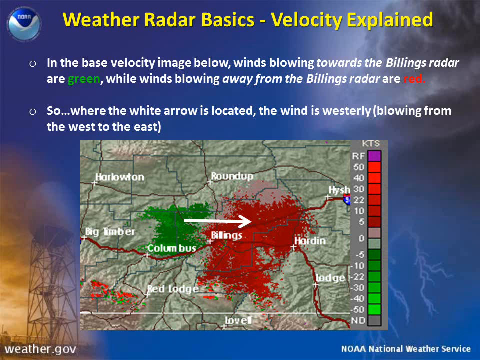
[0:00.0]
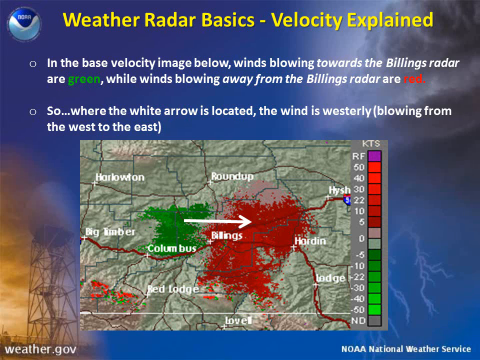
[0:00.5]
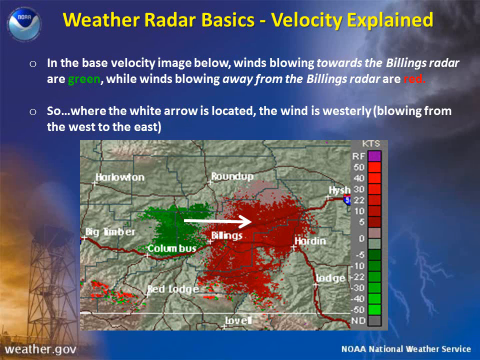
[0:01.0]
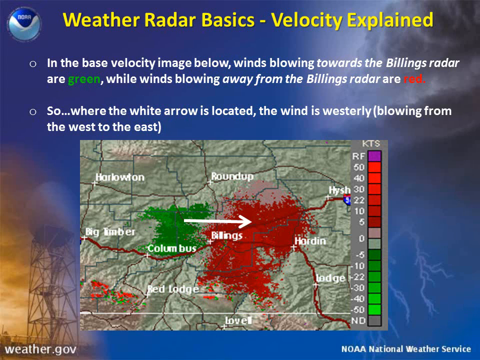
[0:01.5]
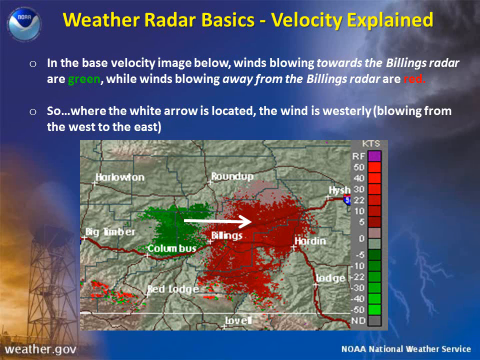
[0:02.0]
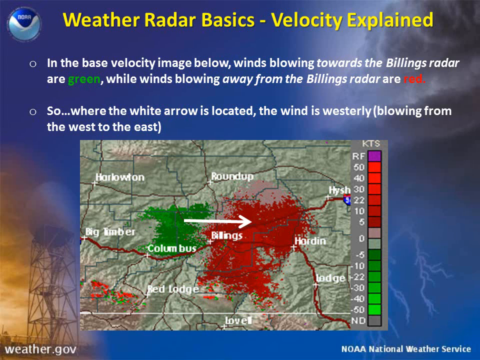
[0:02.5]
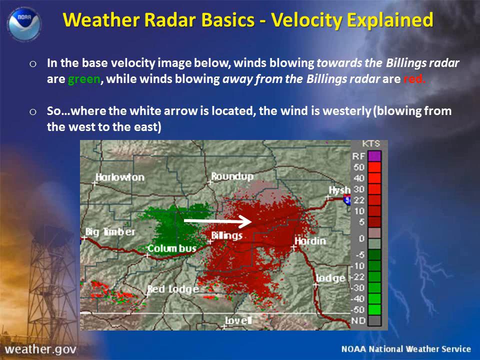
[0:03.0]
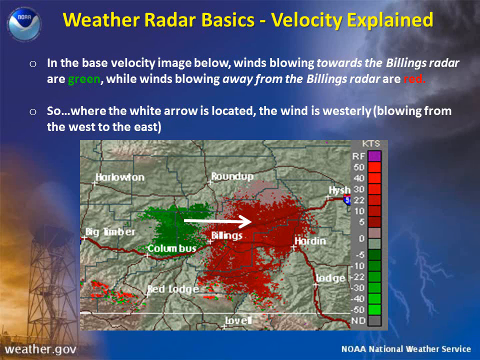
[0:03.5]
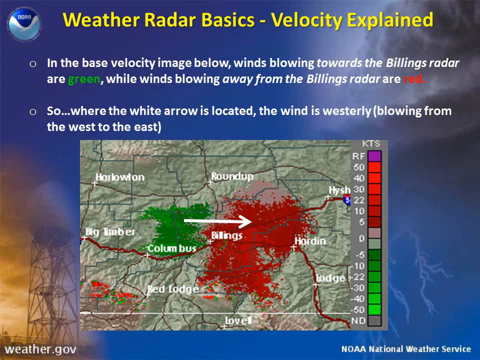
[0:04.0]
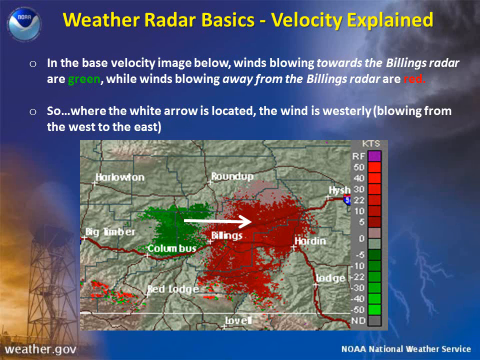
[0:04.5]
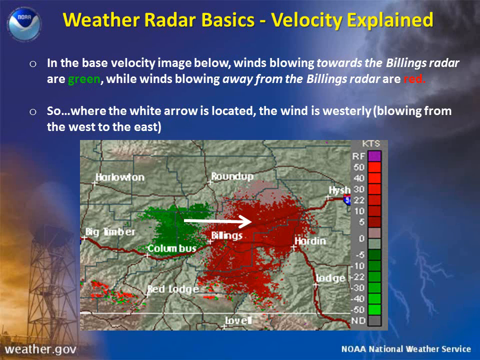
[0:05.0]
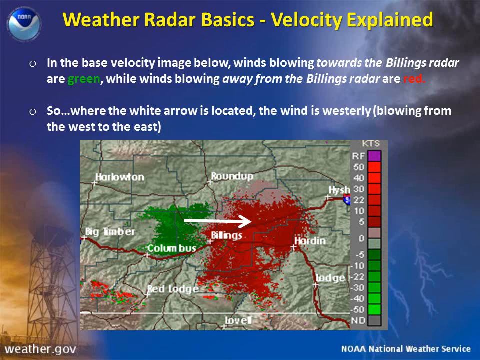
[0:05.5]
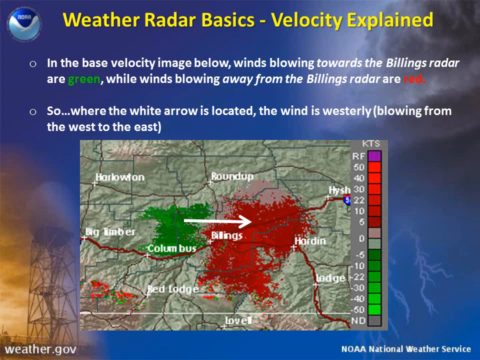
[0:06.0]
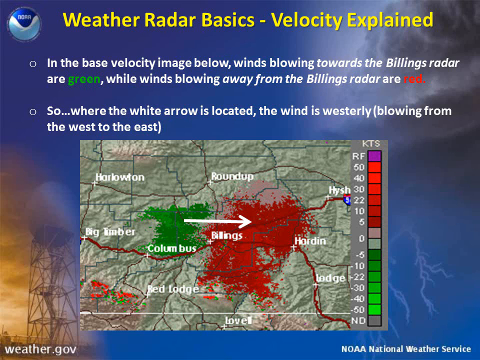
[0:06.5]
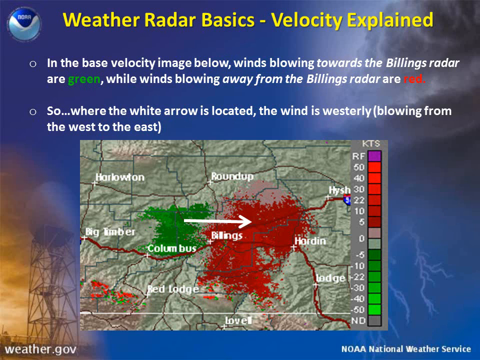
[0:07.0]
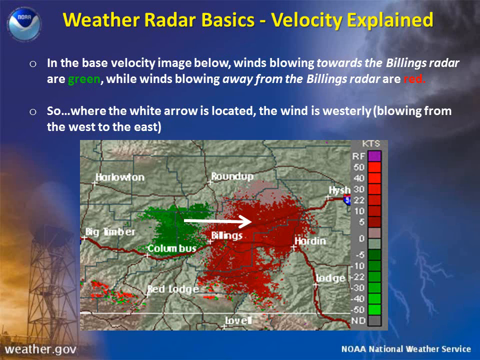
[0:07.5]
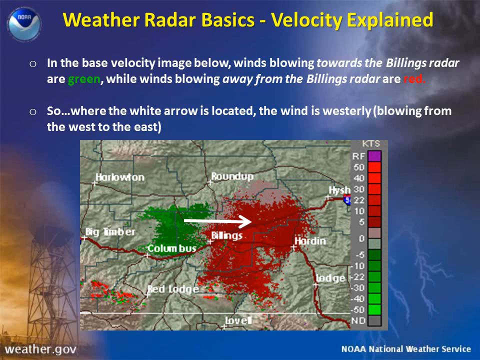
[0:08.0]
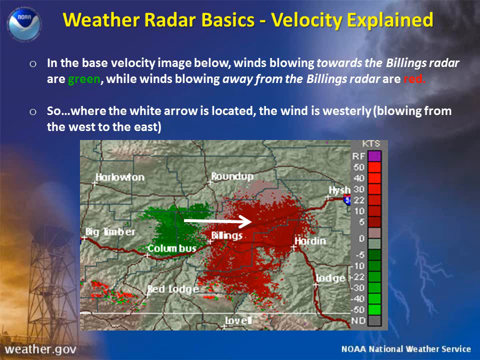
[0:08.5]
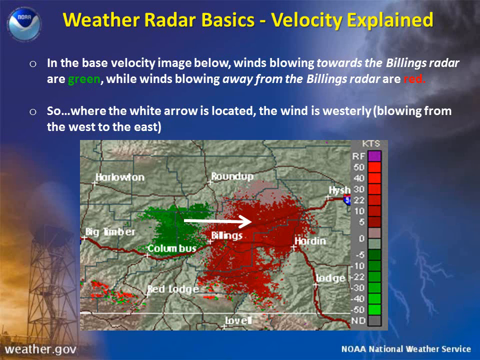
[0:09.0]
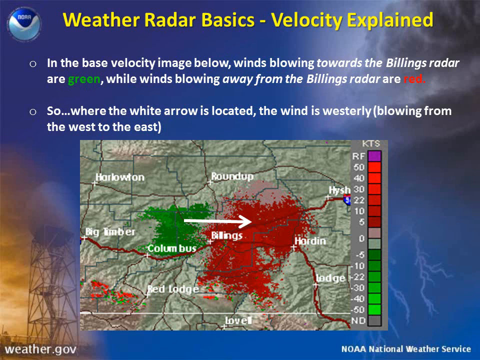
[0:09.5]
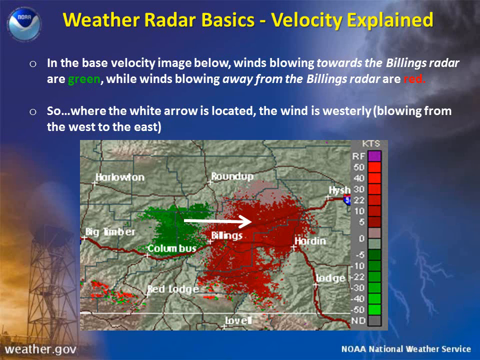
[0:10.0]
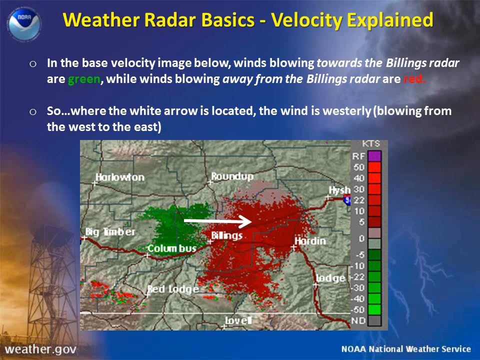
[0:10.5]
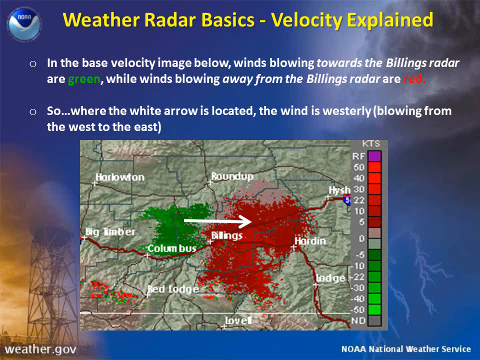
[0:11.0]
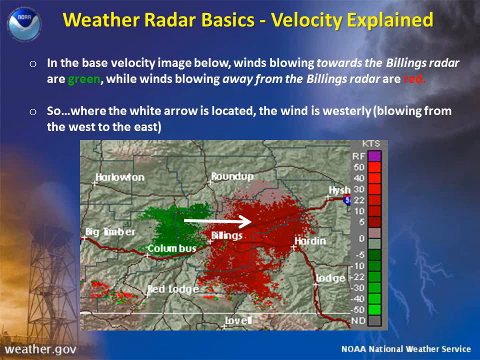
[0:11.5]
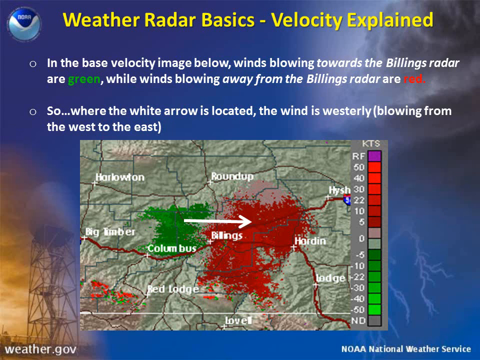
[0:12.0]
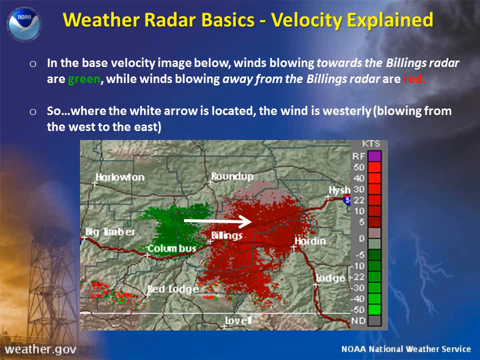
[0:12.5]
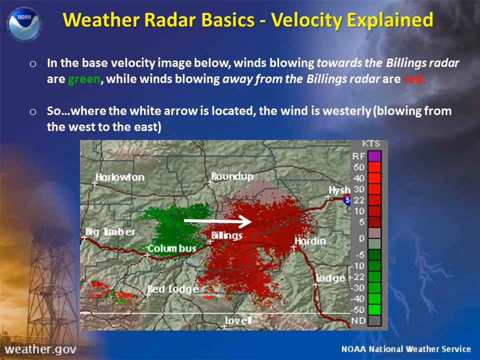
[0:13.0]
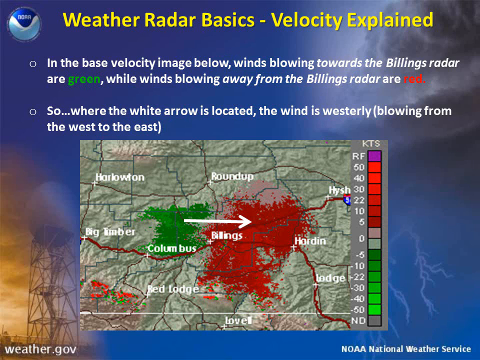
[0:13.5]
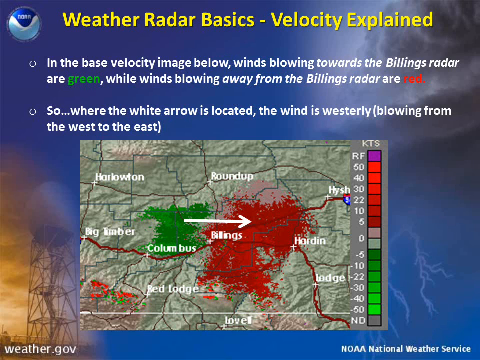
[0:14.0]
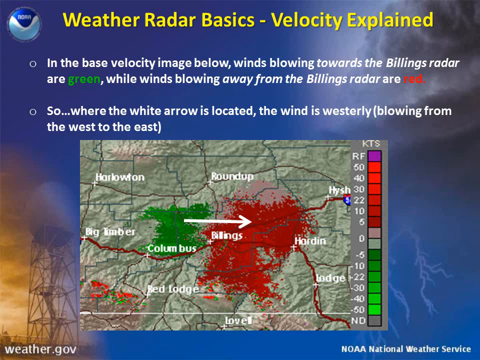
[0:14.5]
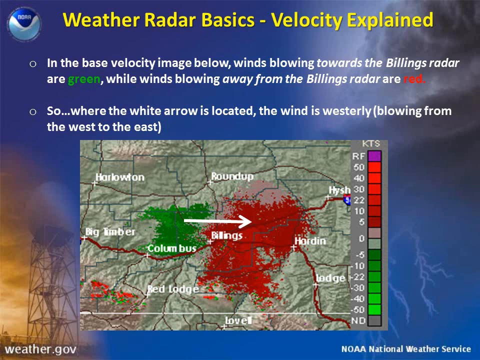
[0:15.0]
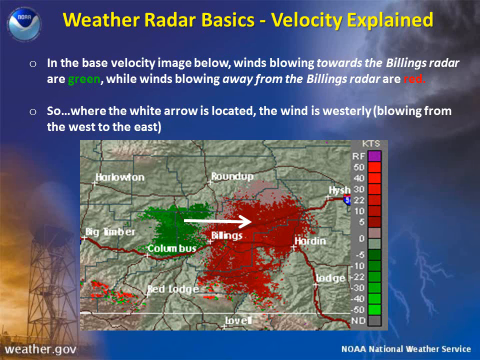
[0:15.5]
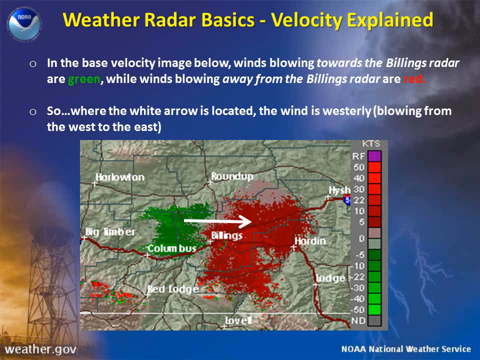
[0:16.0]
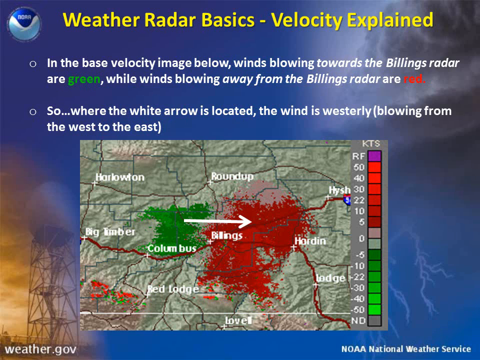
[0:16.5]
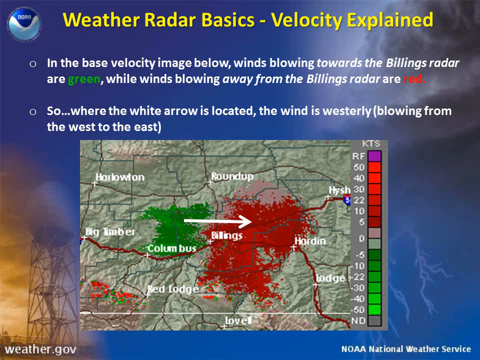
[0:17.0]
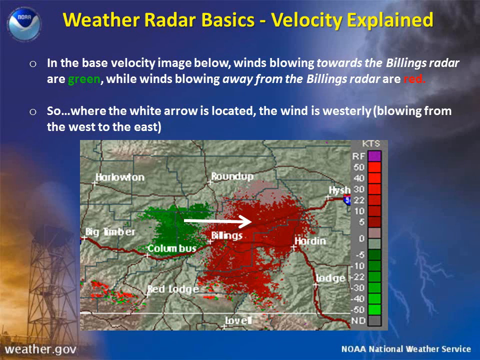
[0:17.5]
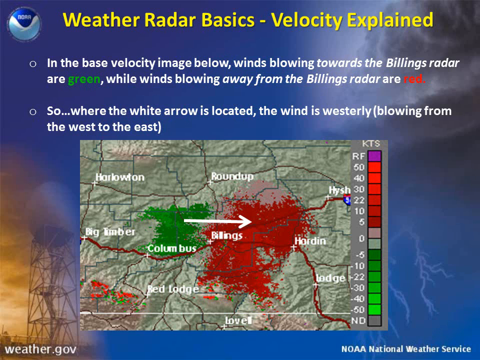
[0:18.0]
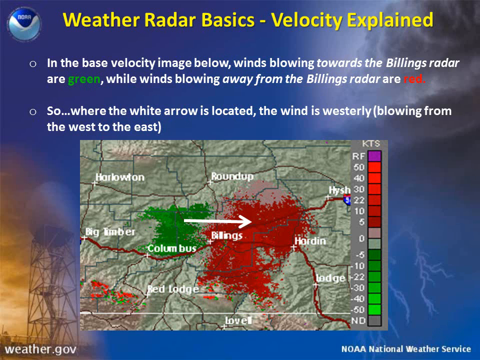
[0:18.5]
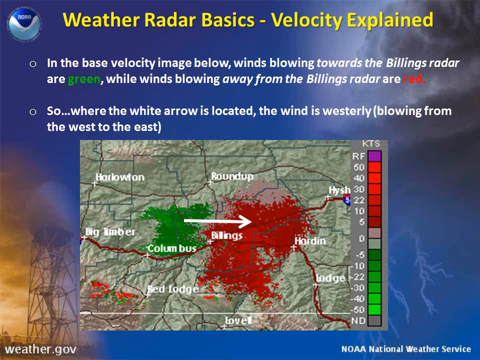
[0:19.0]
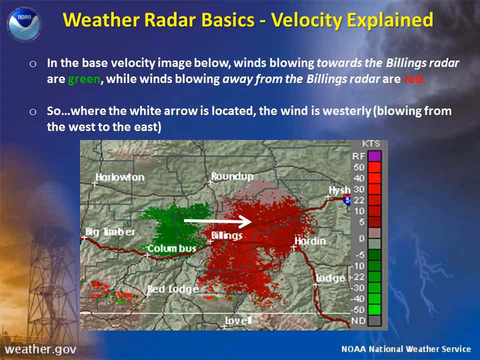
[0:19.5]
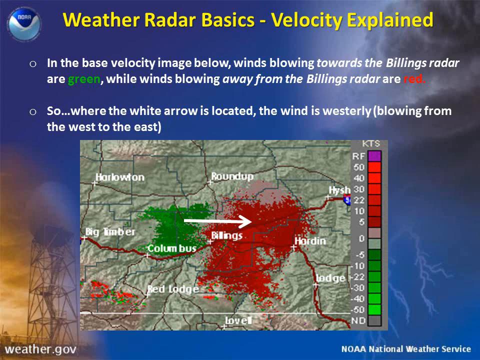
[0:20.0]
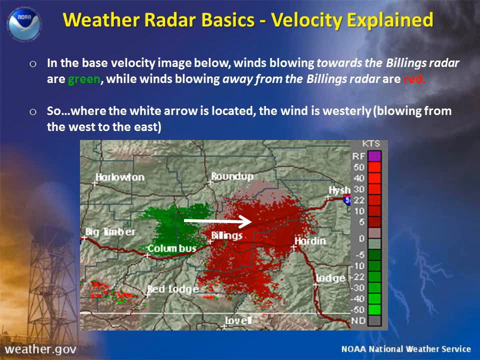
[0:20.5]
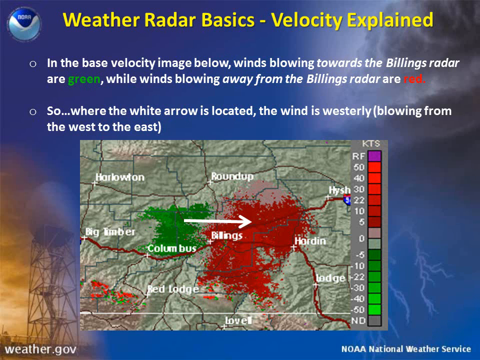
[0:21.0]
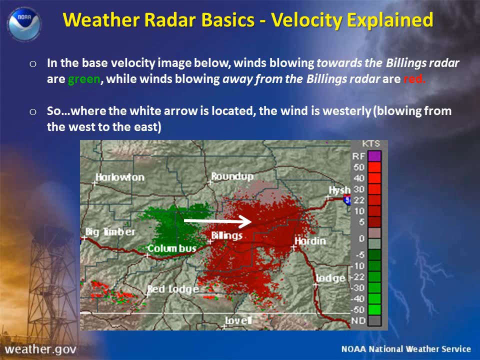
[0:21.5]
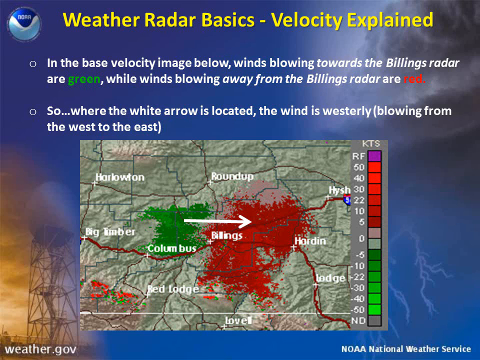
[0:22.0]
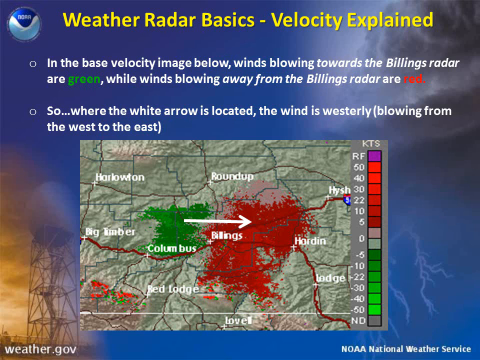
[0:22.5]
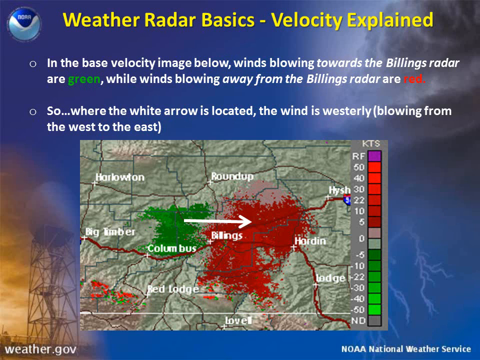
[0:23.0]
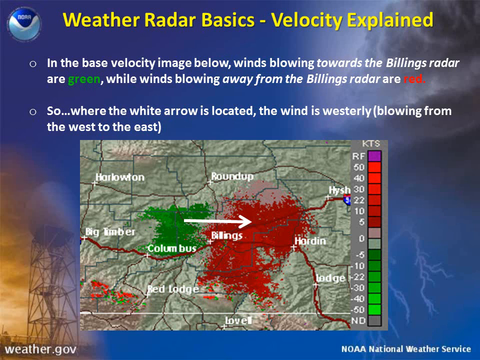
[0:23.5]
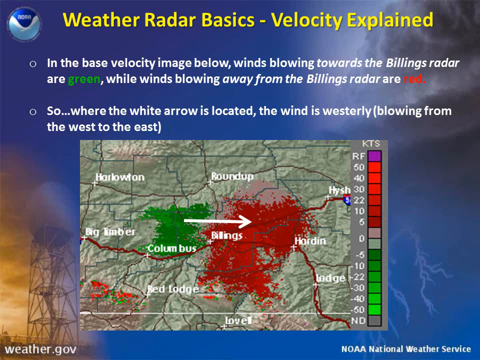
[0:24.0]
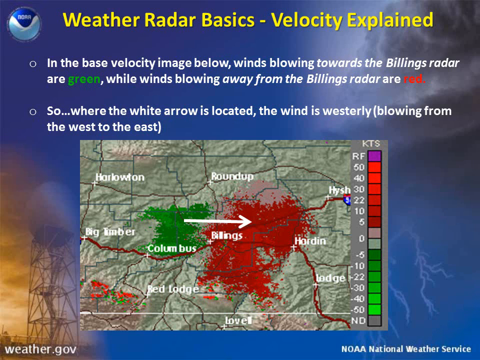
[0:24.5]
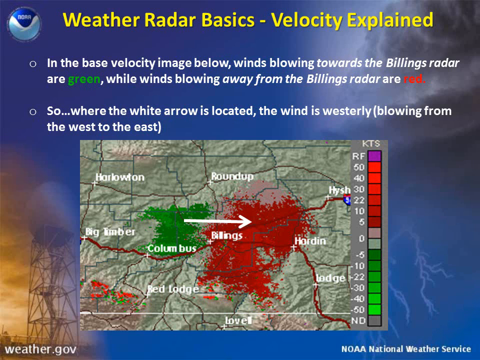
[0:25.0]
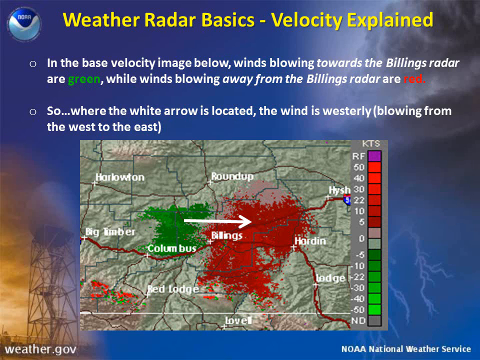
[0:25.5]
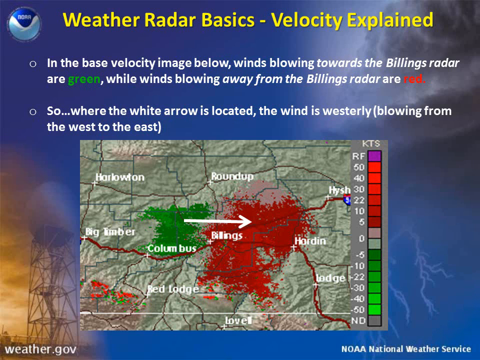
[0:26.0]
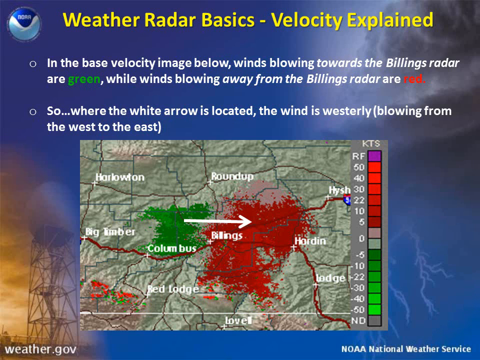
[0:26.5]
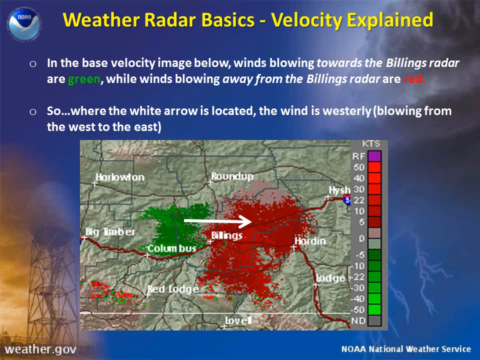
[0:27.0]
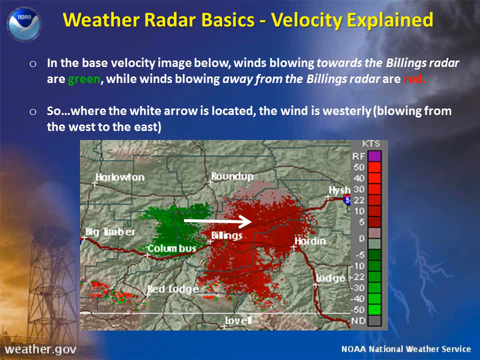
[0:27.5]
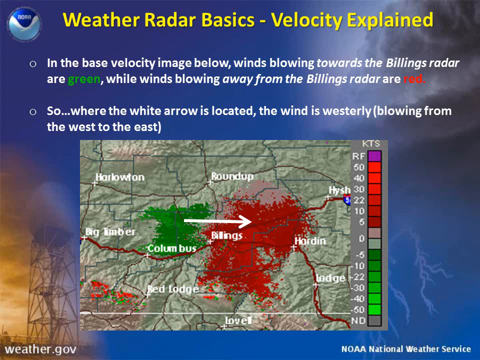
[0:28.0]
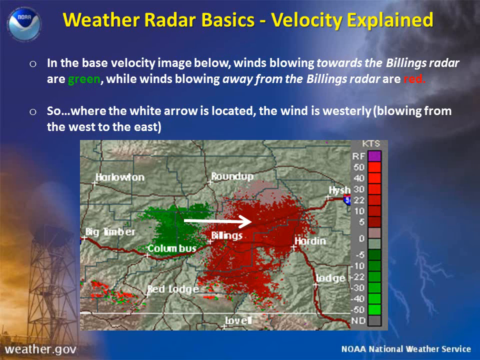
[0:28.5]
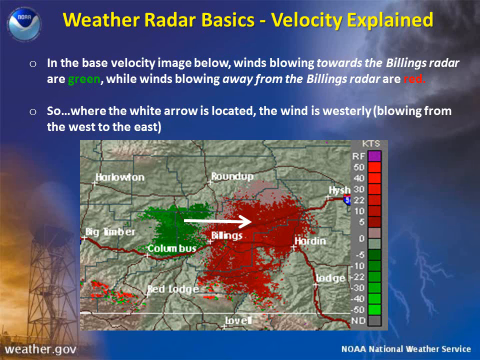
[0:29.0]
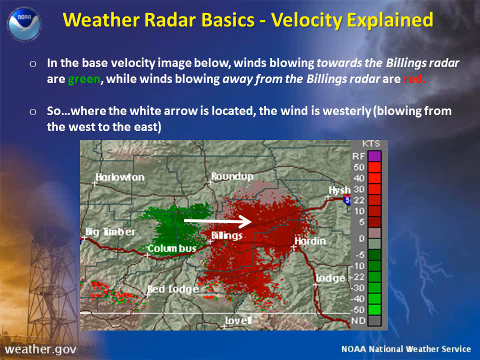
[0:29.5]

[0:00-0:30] A slide has a background of dark clouds in blue shades, some lightning, and what looks to be a meteorology tool: a tower with some type of circular, egg-shaped ball on top that can be used to measure the weather in some way. The slide is titled "weather radar basics velocity explained" in yellow at the top. To the left of the title is a bluish logo, dark blue in the center on the top and light blue on the bottom, separated by some white lines. Underneath the title is white text reading "in the base velocity image below winds blowing towards the Billings radar are green while winds blowing away from the Billings radar are red"; the word "green" is in green text and the word "red" is in red text. Another bullet point, a hollow bullet with a white outline, reads "...where the white arrow is located the wind is westerly blowing from the west to the east." A map image of a local area follows, with a green, kind of cloud-like patch and a bigger red patch with an arrow.